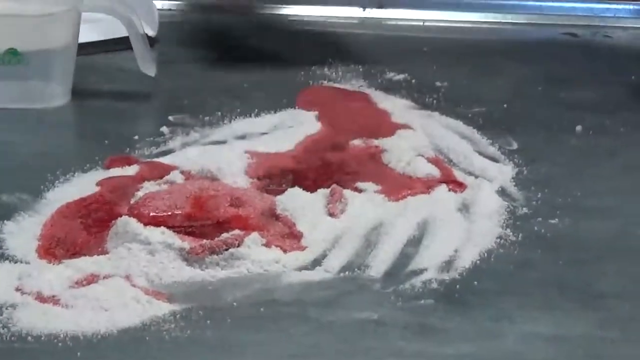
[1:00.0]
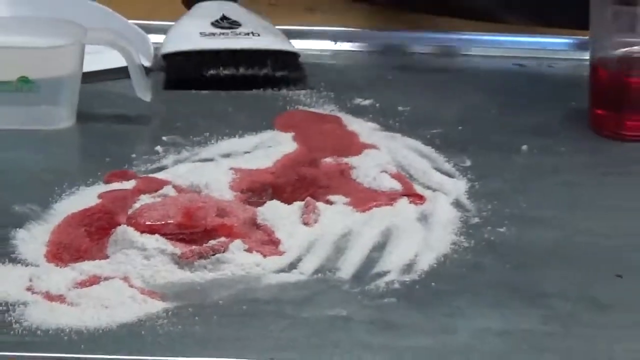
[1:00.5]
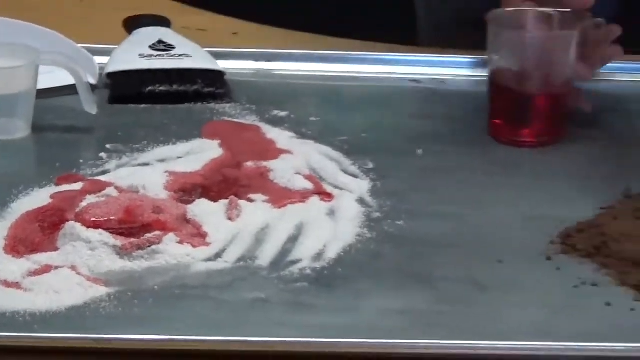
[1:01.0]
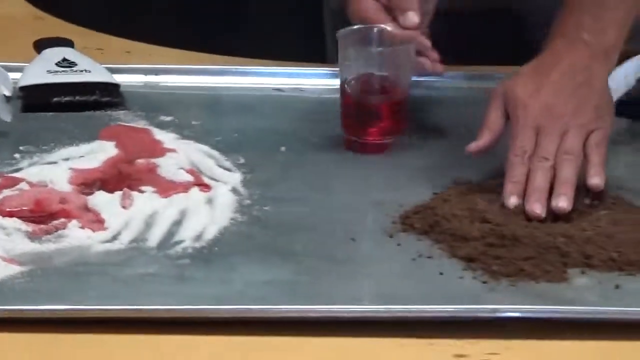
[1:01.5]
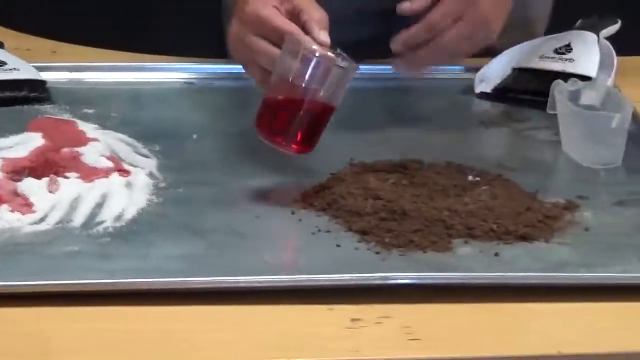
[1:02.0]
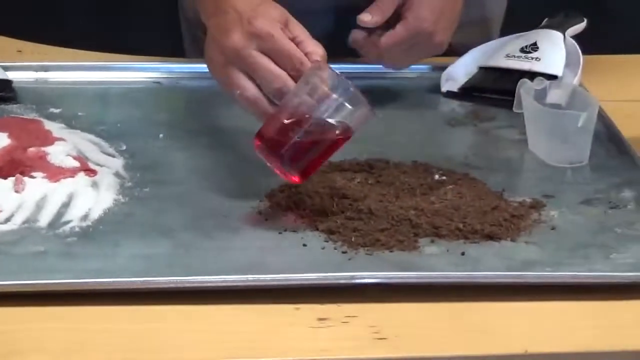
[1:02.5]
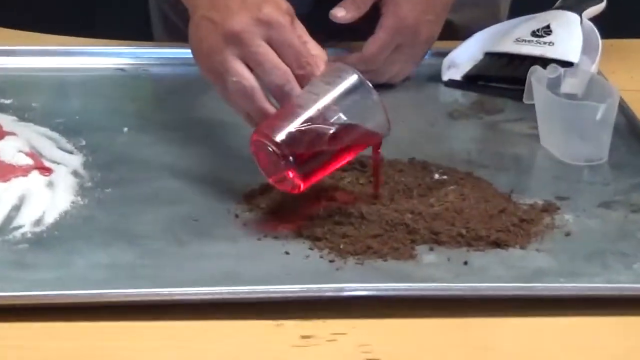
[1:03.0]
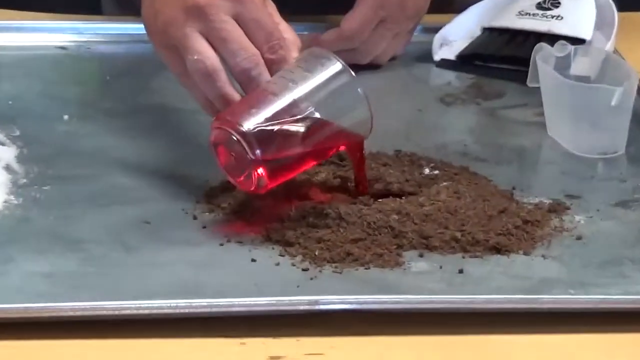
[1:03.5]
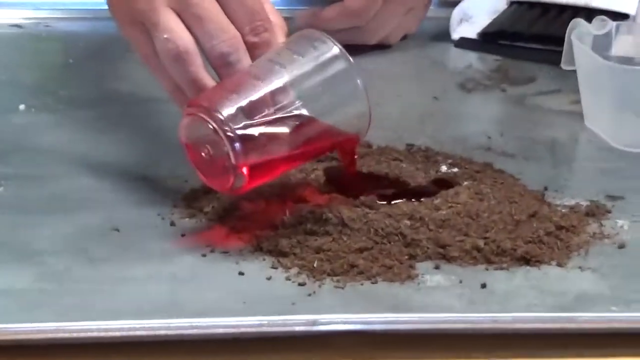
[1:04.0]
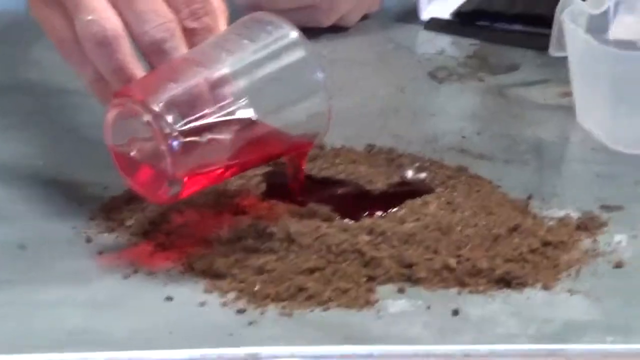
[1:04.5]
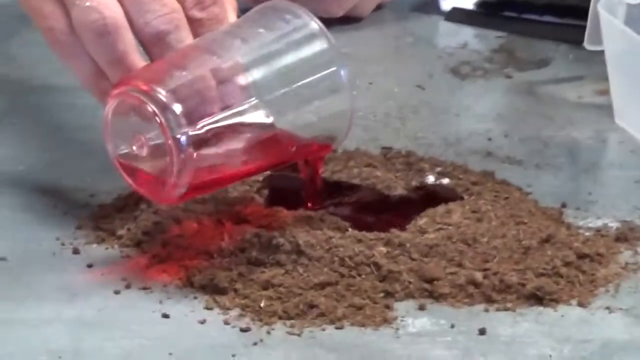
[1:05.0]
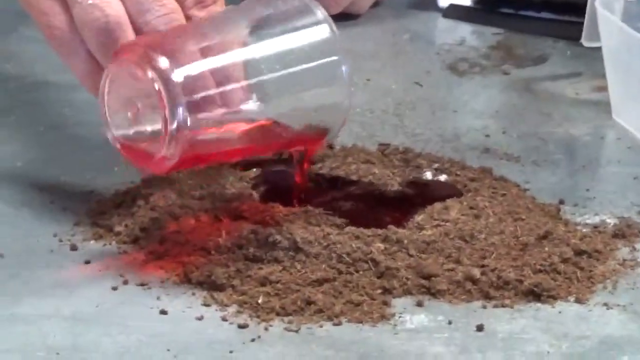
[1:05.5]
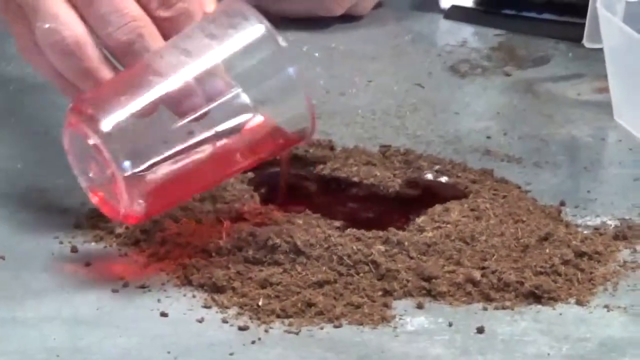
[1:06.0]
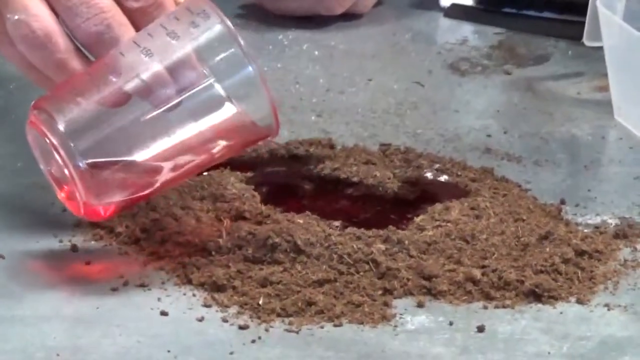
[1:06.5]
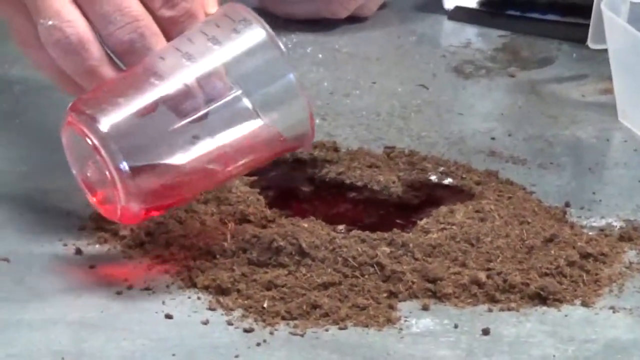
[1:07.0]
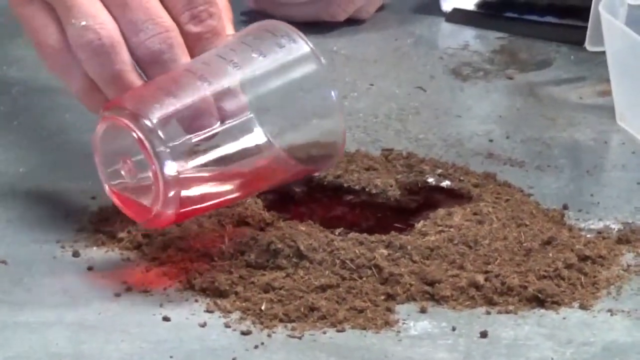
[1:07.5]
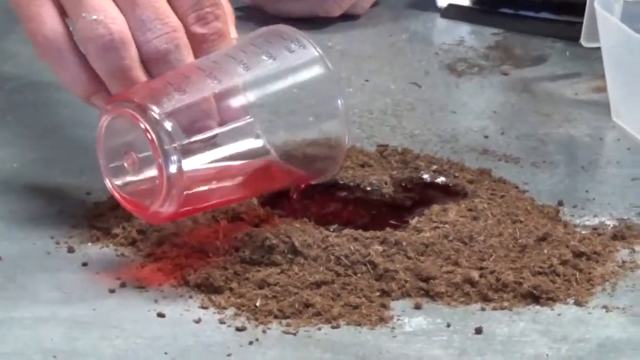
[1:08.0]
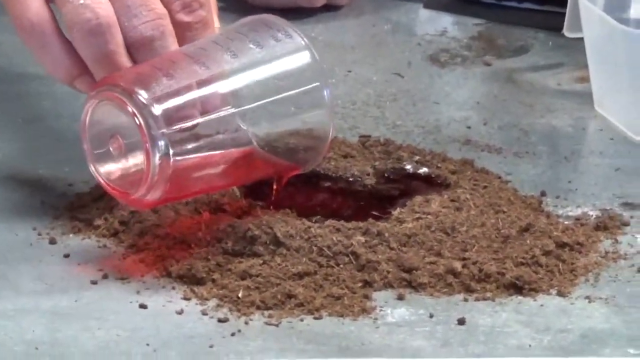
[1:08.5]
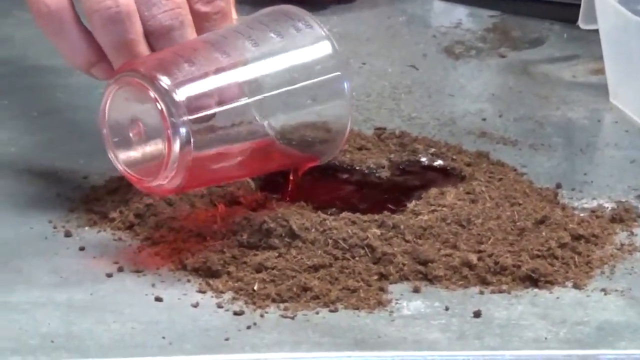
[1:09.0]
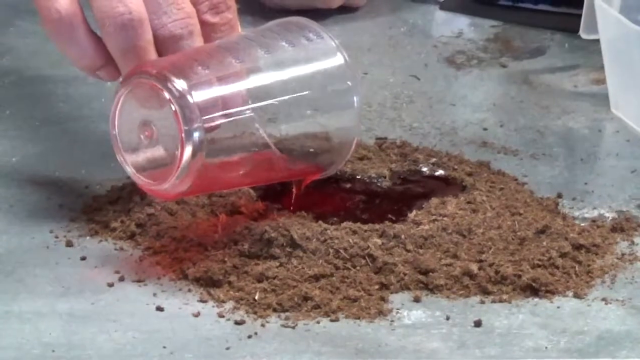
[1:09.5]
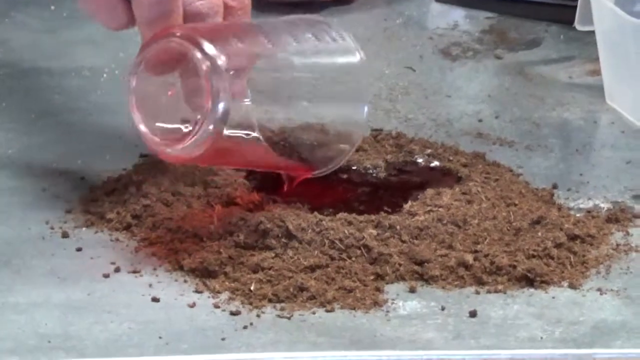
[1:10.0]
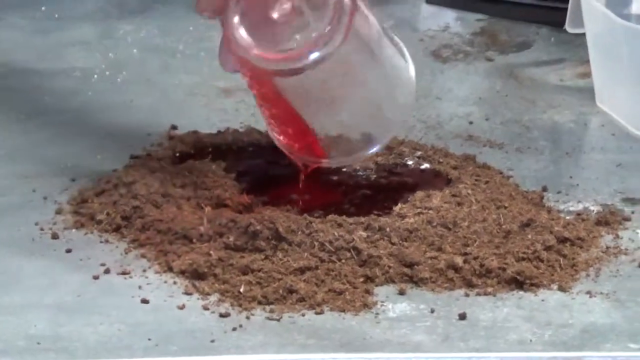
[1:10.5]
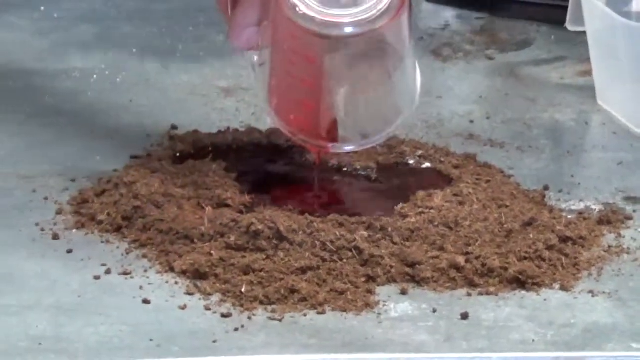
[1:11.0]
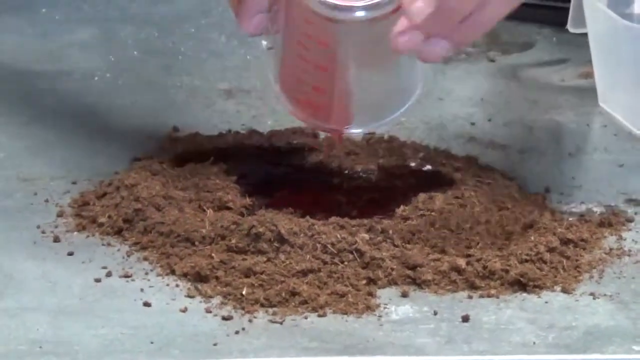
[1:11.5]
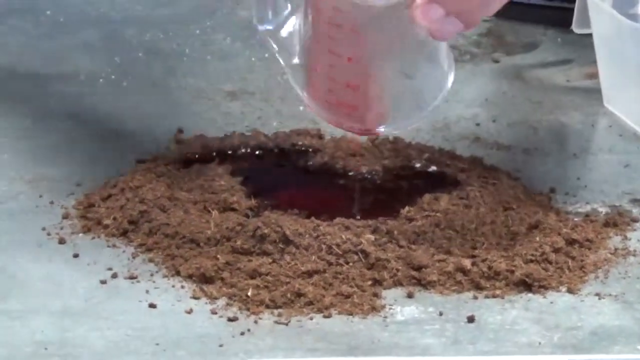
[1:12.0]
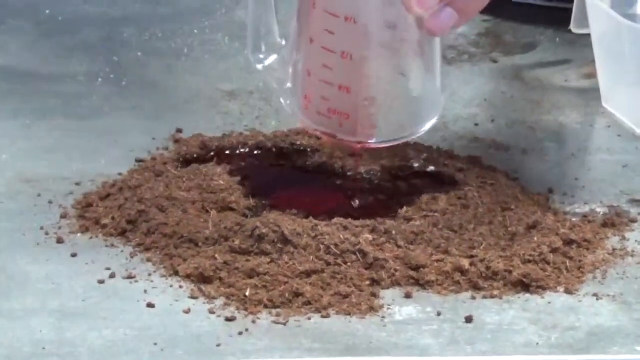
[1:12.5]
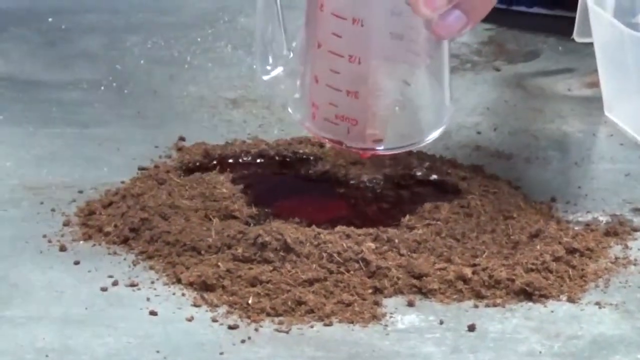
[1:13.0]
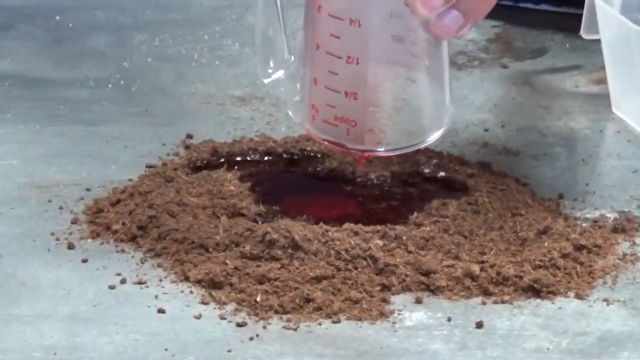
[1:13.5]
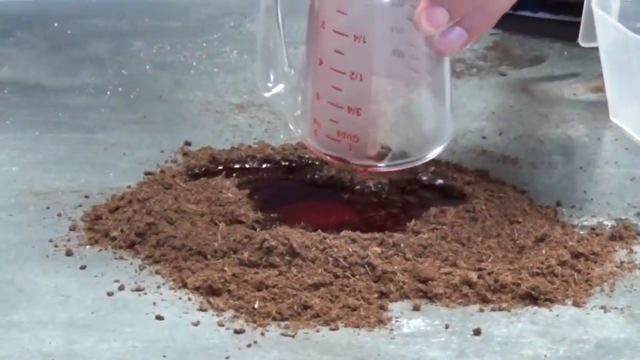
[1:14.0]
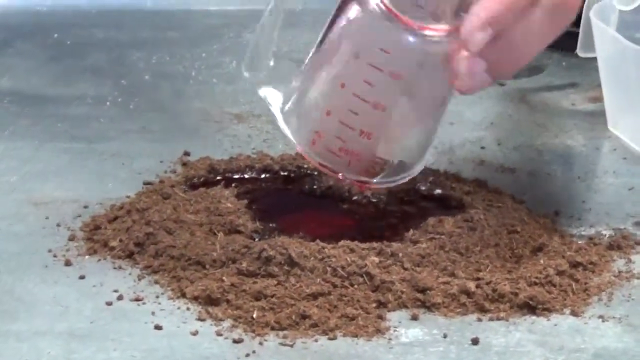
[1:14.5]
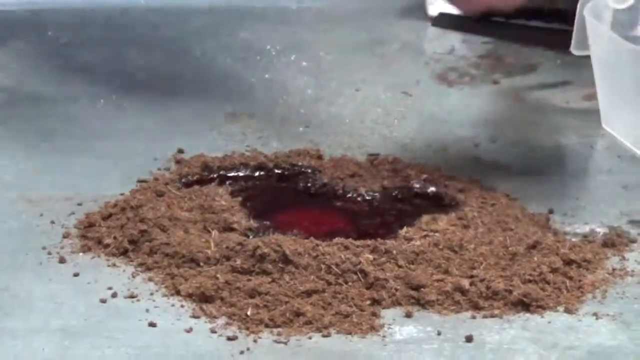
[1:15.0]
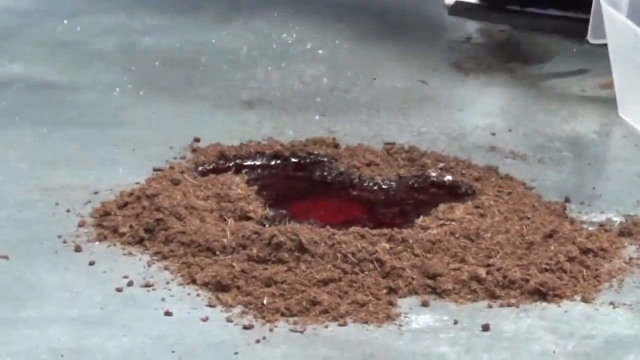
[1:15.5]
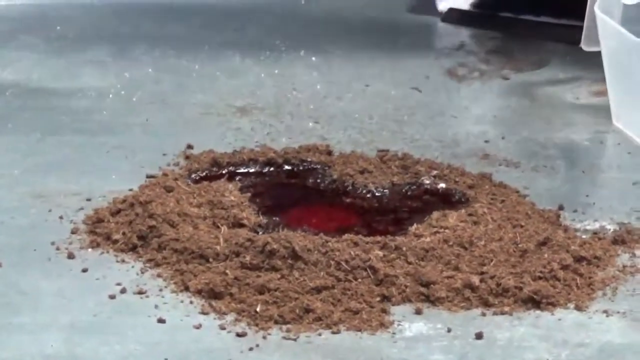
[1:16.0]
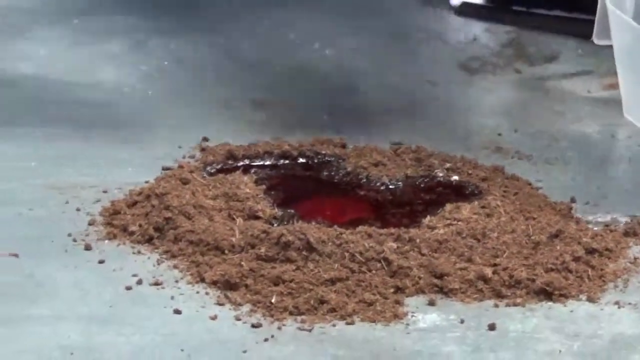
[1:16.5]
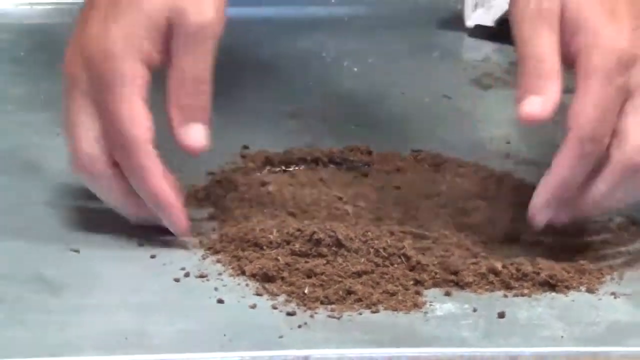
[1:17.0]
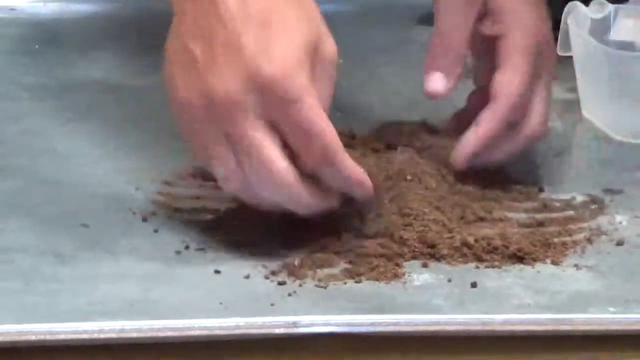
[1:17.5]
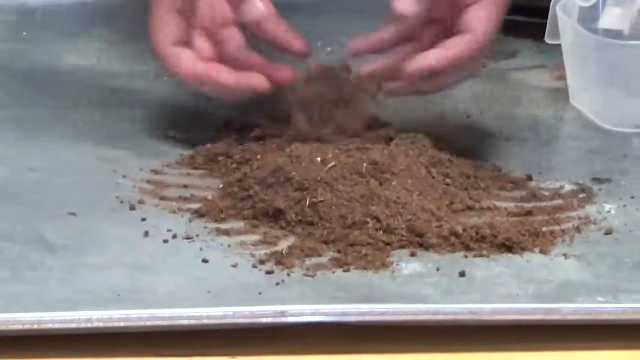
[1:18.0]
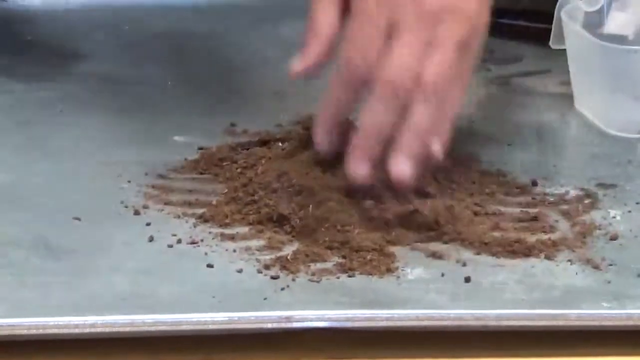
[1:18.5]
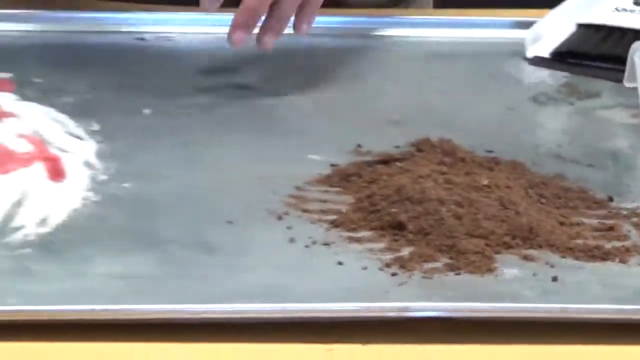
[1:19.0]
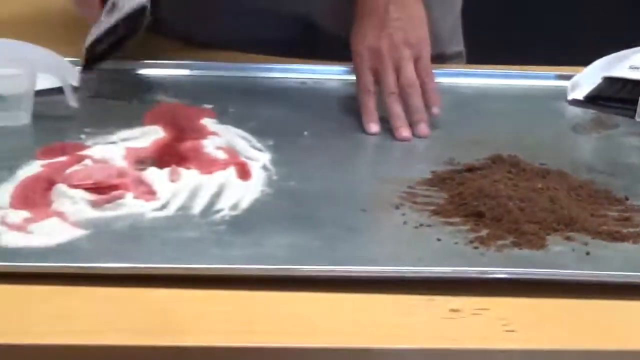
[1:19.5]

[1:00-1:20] The liquid is still being absorbed by the product, and the man's finger strokes are visible on the product where he spread it. The liquid poured on the left product has settled. The man uses his hands and the brush to keep the product in that area. He picks up the other red liquid for the right product. The product on the right is brown, while the product on the left is white. He pours into the crater in the right product, seemingly more careful this time to avoid making a mess as on the left, and empties the liquid from the cup. He uses the product to cover up the red liquid, then picks up the brush to tidy up the areas he left scattered on the left.